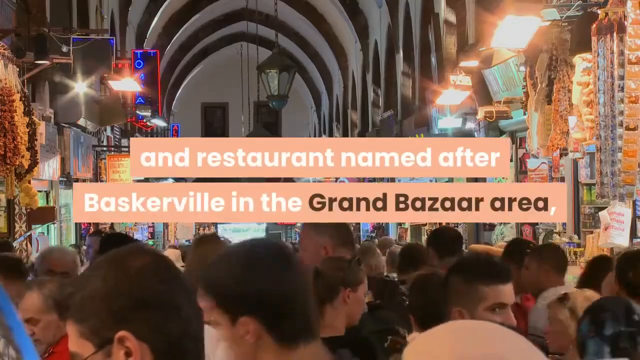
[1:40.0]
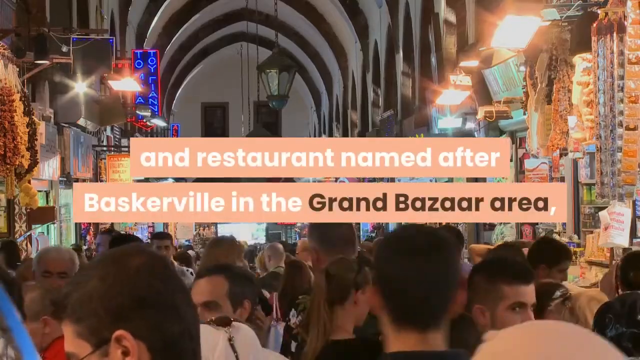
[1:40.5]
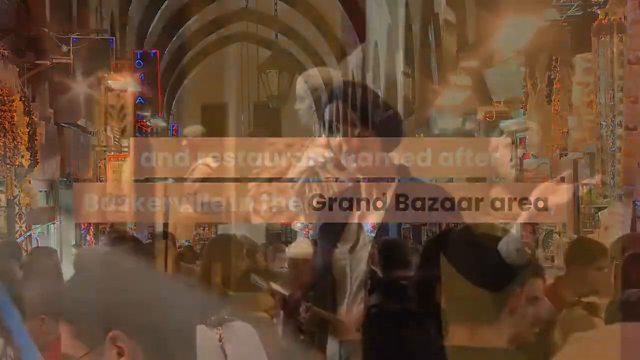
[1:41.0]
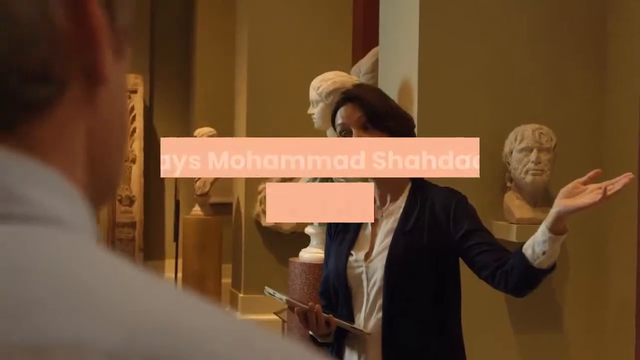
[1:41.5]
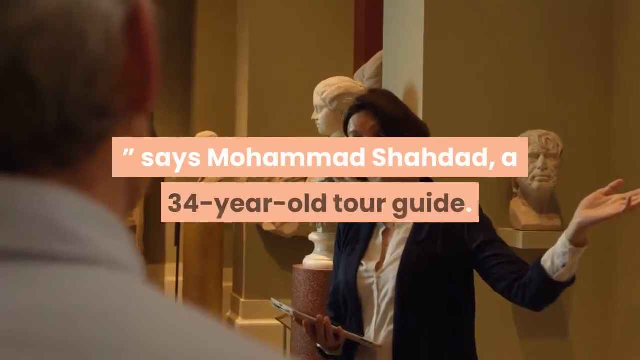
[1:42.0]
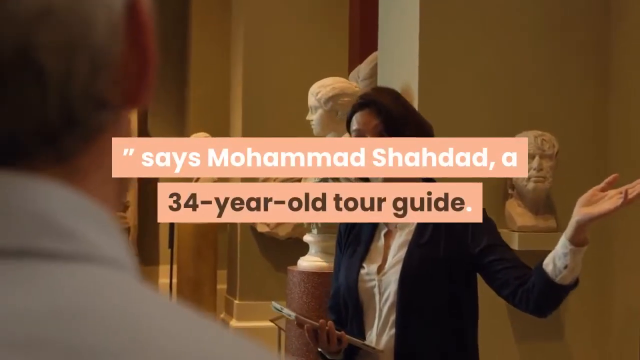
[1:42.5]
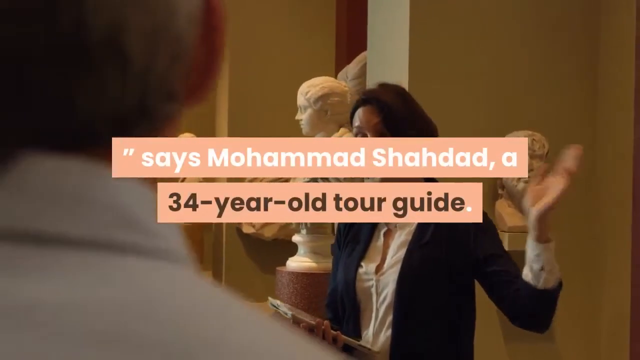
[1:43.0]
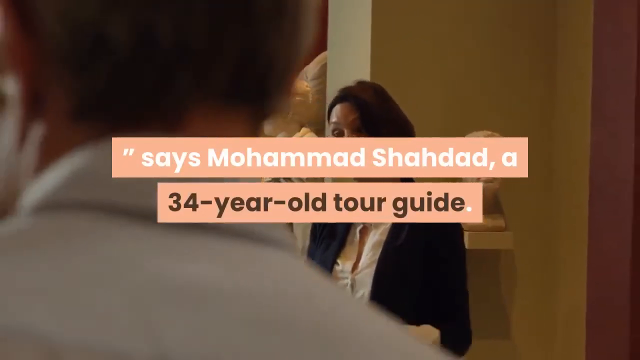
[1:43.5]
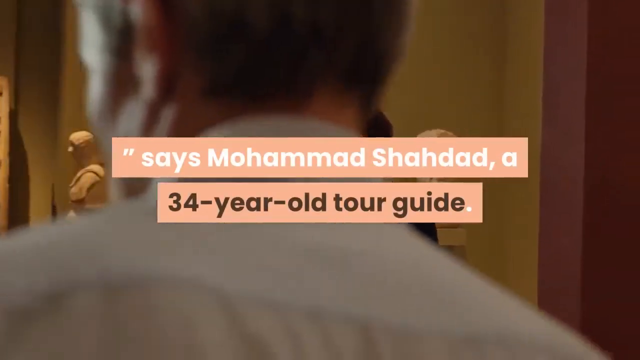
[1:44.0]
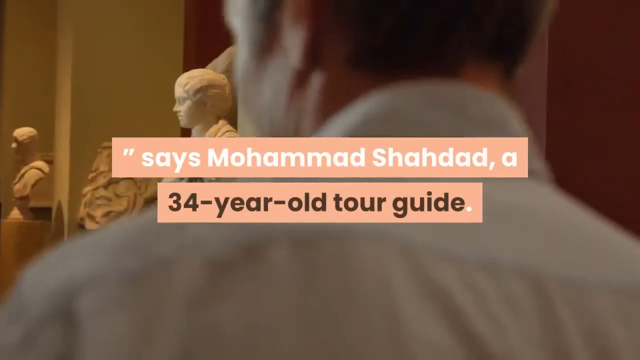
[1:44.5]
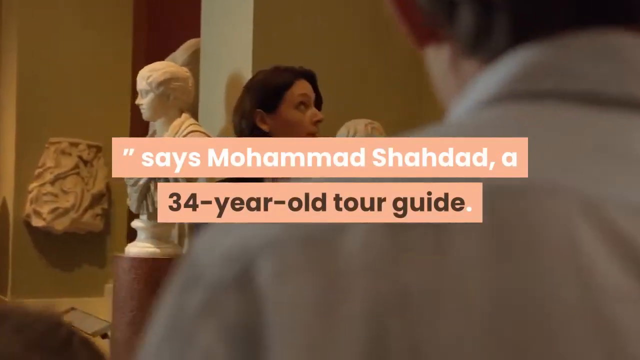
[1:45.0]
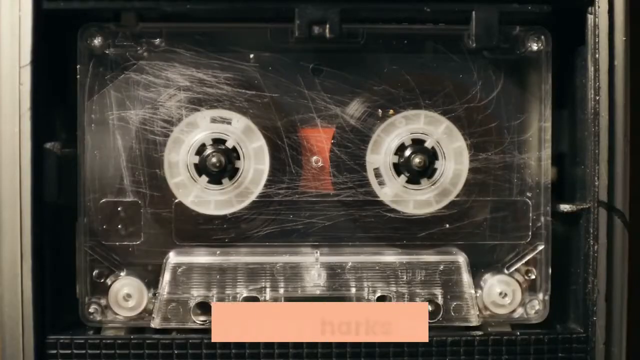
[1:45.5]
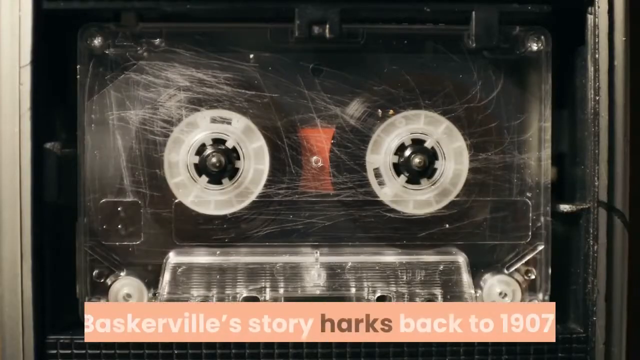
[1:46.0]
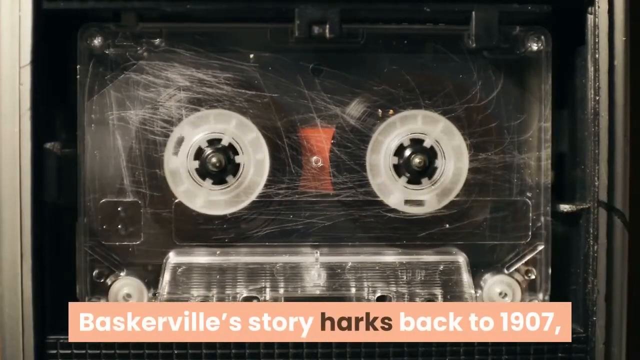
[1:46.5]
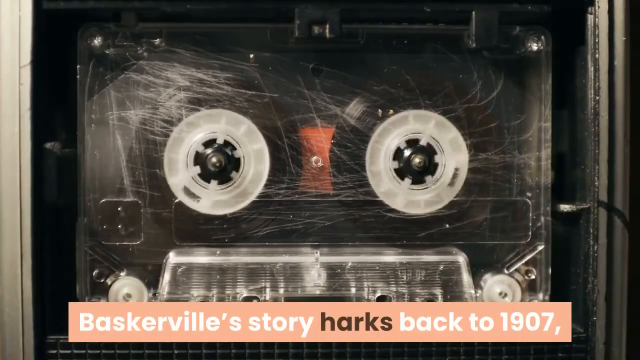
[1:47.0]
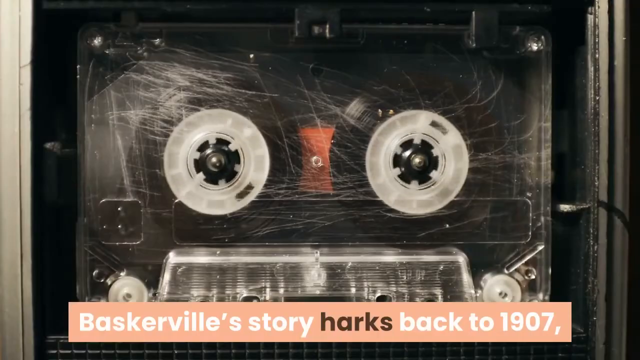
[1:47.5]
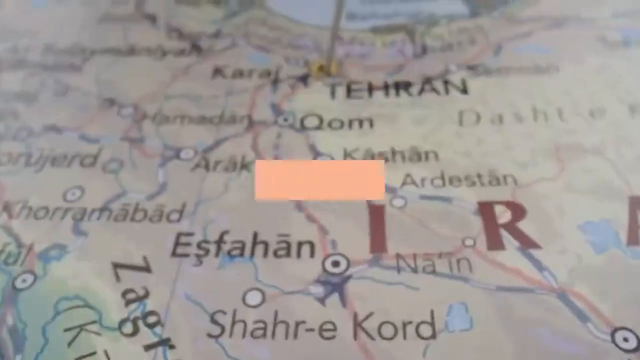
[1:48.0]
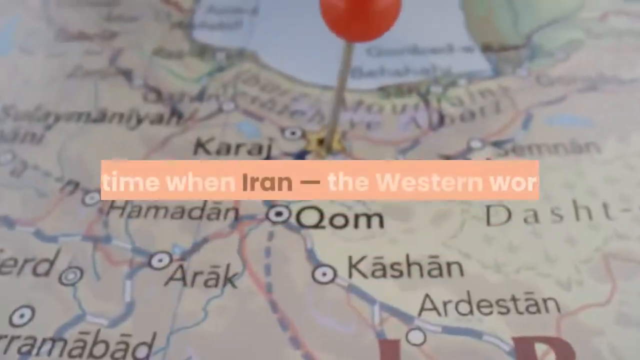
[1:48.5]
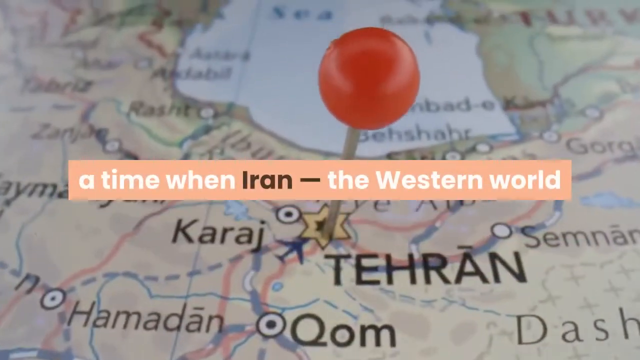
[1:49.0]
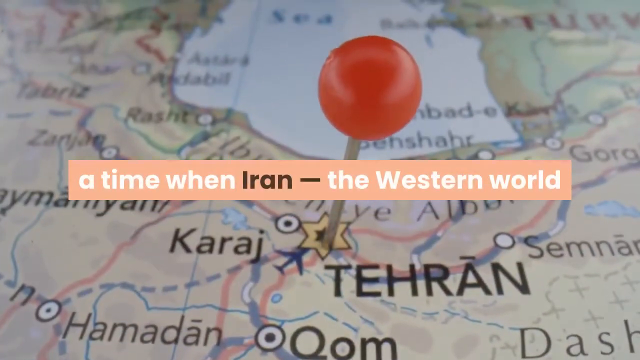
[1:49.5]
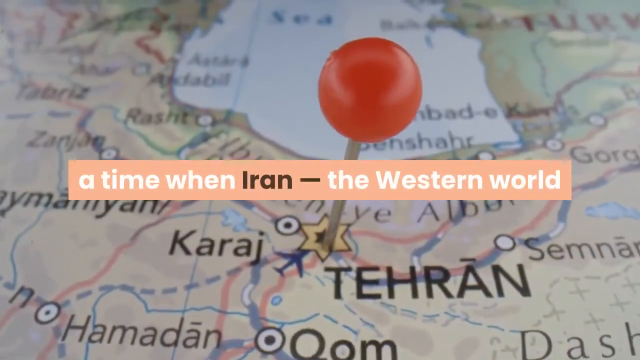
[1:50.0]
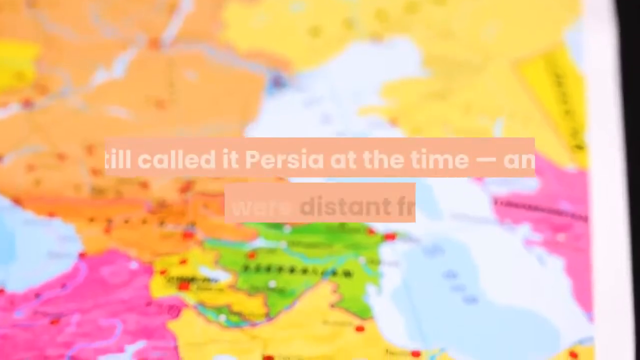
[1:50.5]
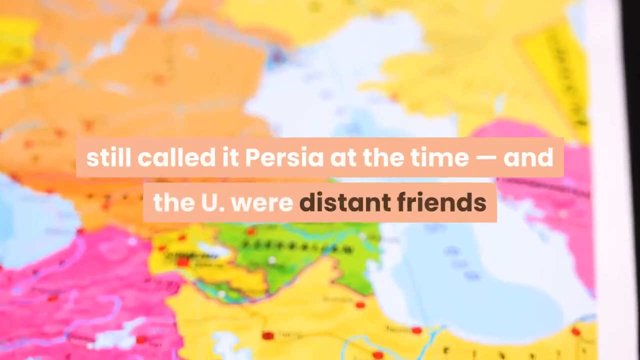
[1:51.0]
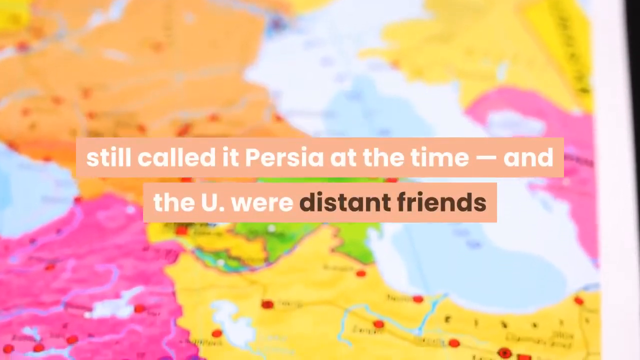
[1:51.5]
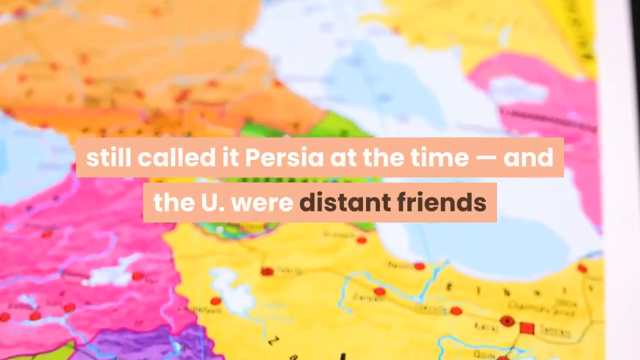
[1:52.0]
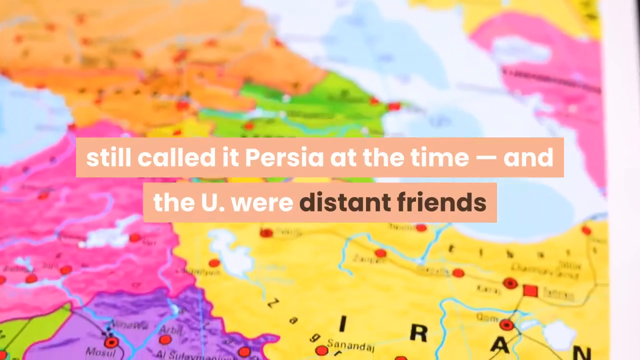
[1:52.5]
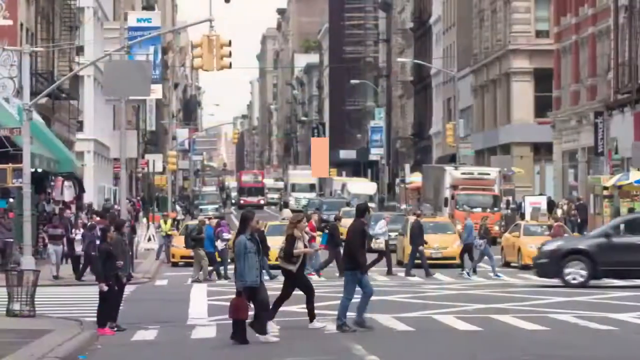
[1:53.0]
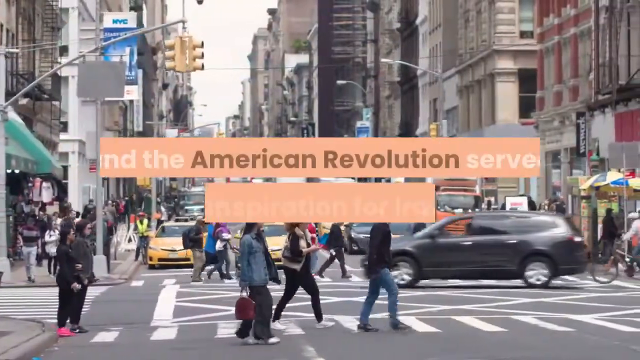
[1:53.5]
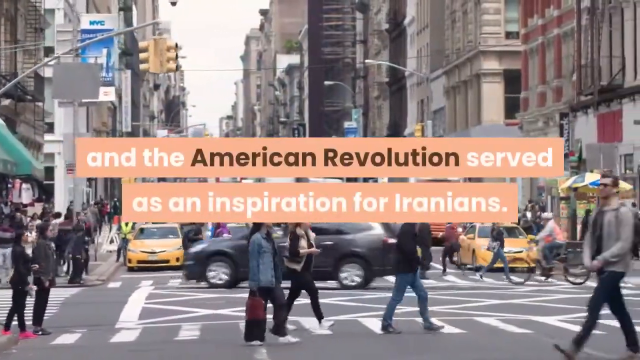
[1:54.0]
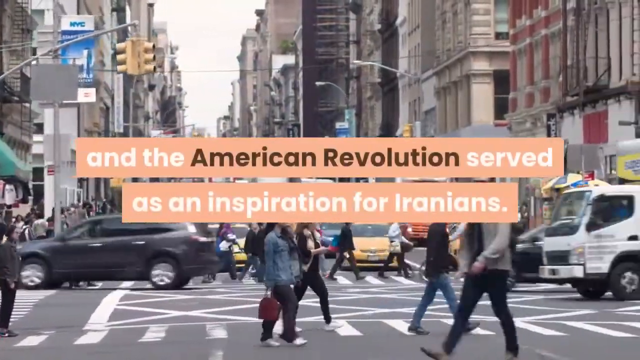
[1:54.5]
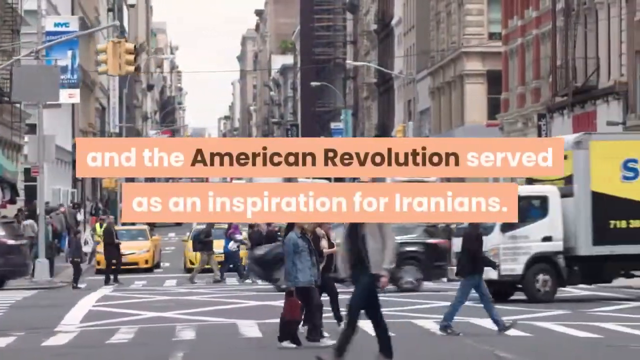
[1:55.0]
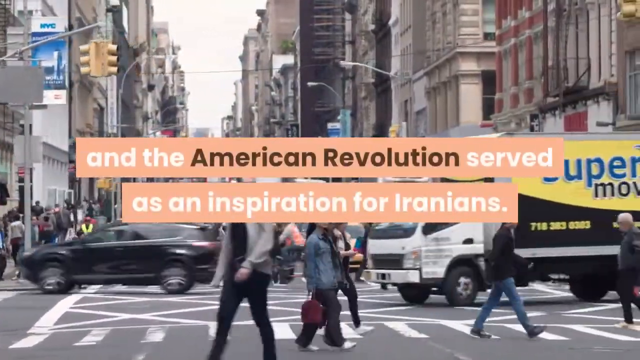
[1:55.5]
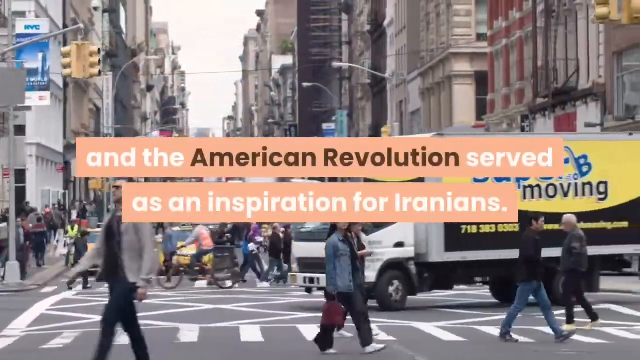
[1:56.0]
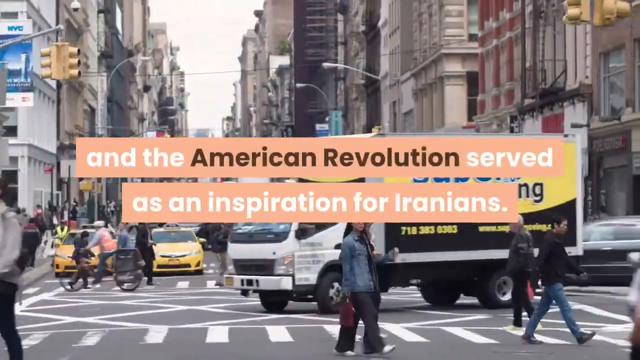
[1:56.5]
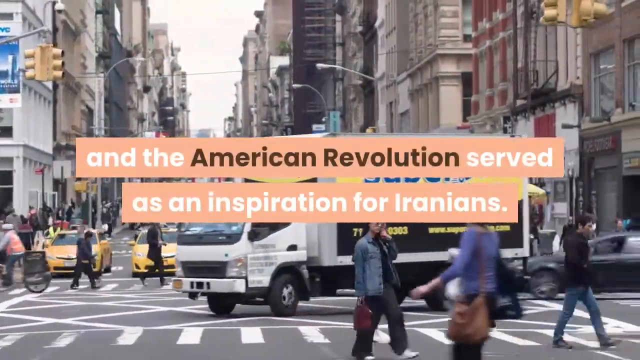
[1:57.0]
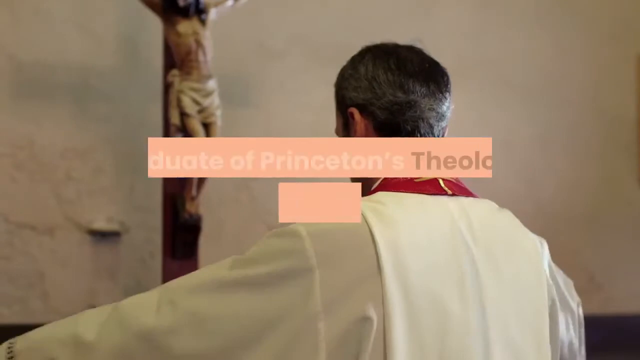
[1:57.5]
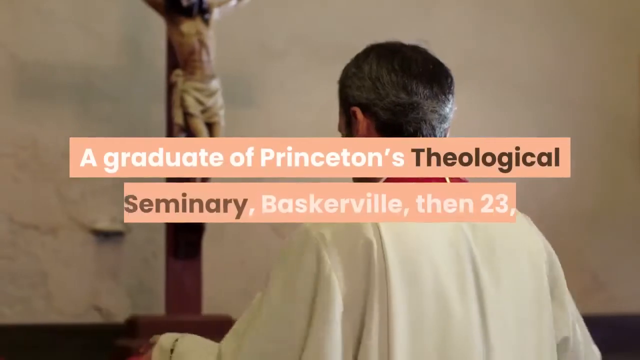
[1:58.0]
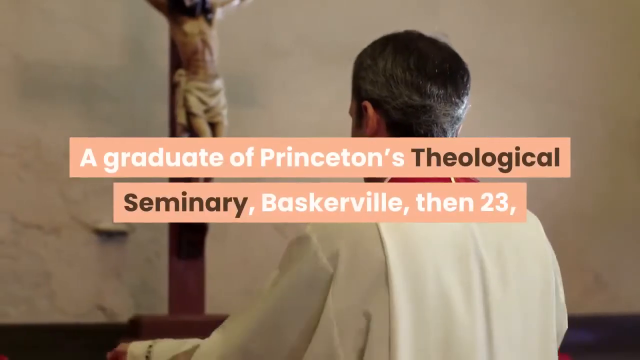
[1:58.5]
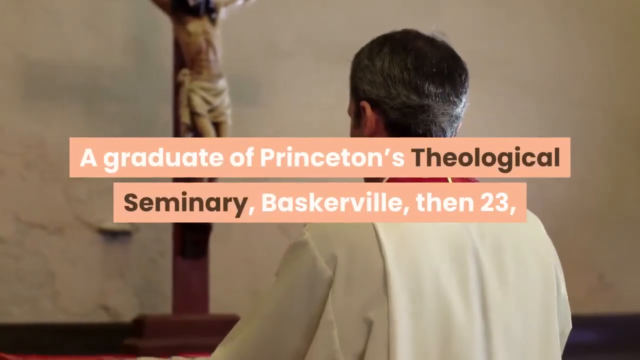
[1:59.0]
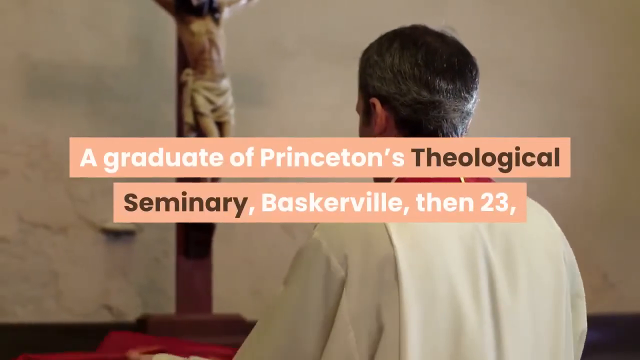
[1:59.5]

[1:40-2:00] A view of the Grand Bazaar area shows crowds of people and lots of lights. Then a woman stands talking to a man whose back is to the camera, with several statues and busts behind her. Next is a scratched-up videotape, and then the camera pans over several maps of the Middle East, focusing on Persia. A bustling modern U.S. city, probably New York, appears at a busy intersection as people and cars go by. Then a priest stands at an altar facing a crucifix. The overlaid text says that at a time when Iran was still known as Persia, and Iran and the United States were distant friends, the American Revolution served as inspiration for the Iranian people, and that Baskerville went to seminary and at 23 traveled to Iran.